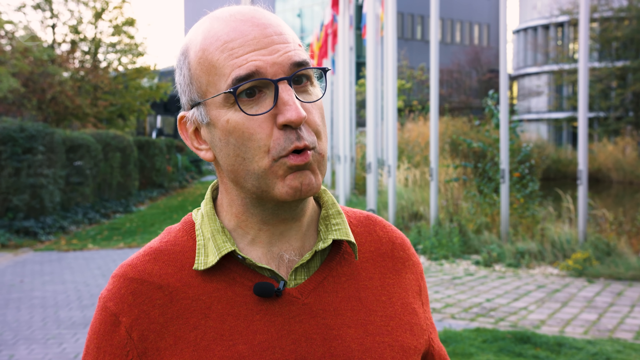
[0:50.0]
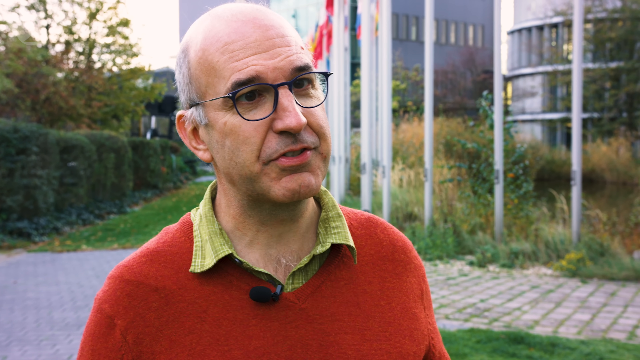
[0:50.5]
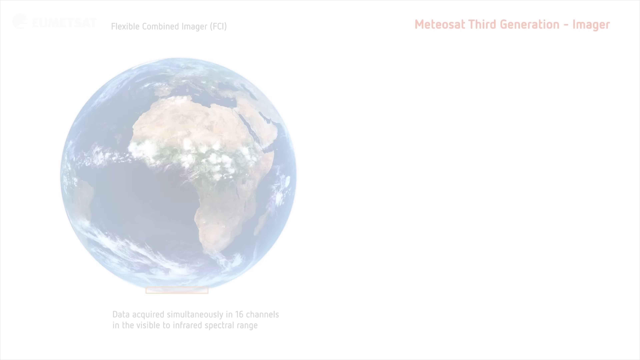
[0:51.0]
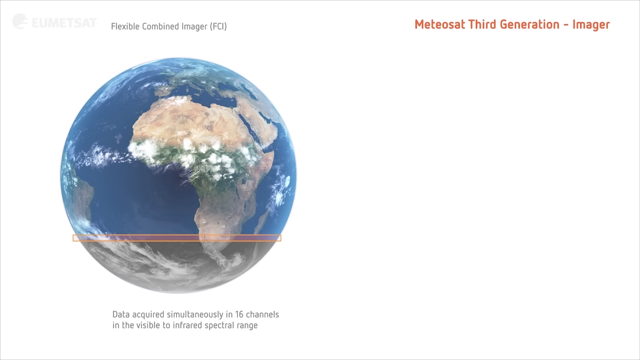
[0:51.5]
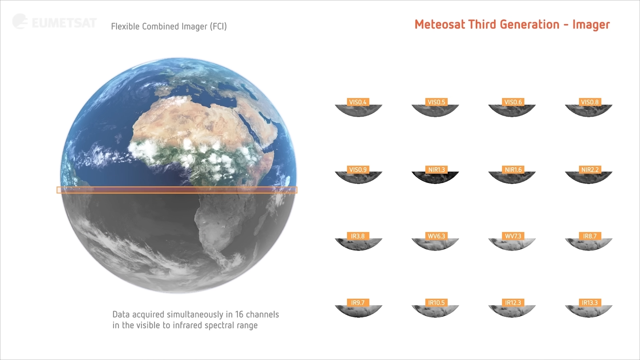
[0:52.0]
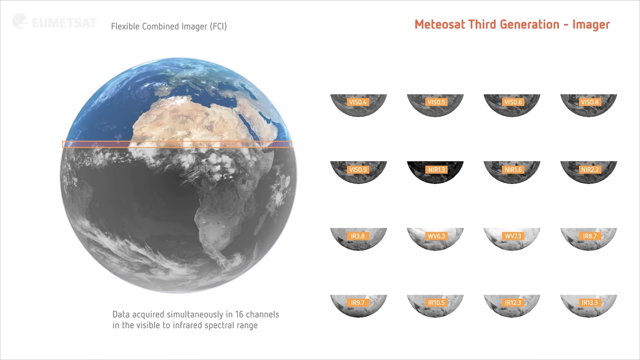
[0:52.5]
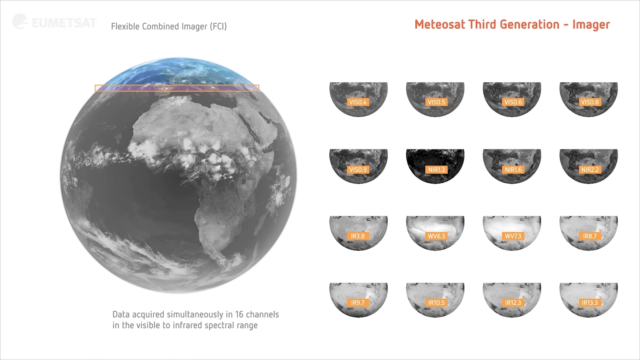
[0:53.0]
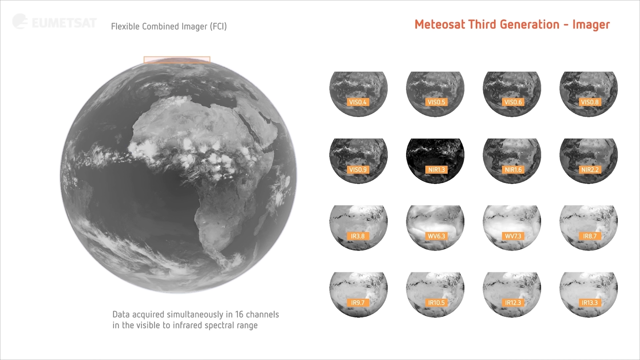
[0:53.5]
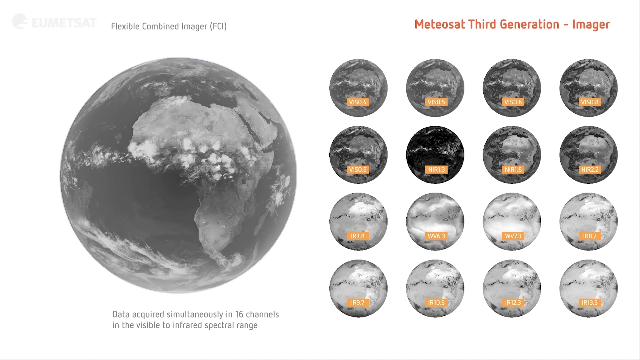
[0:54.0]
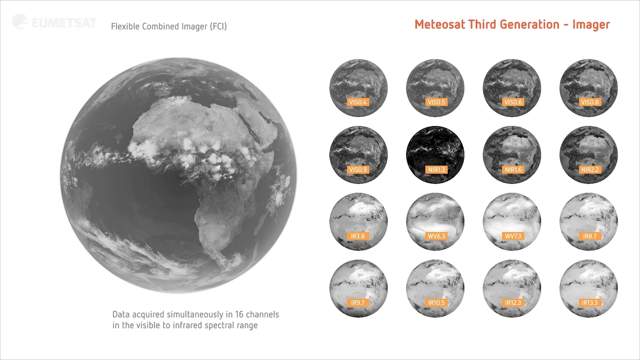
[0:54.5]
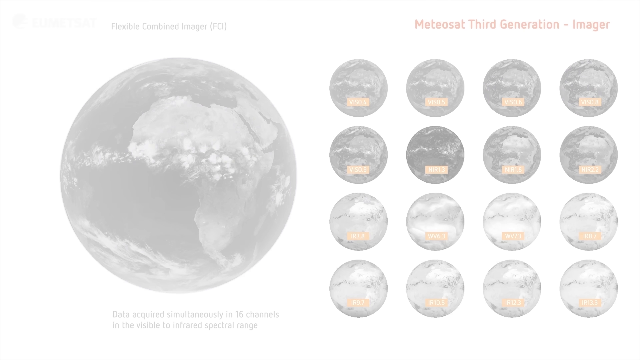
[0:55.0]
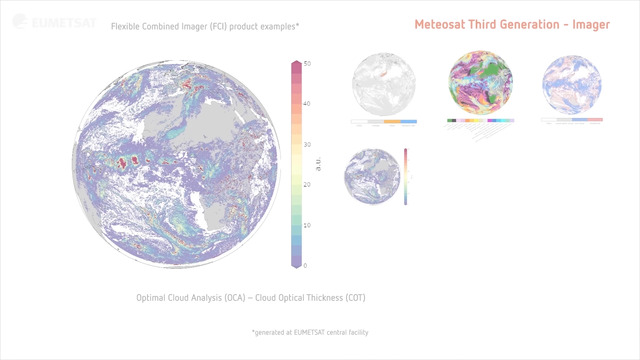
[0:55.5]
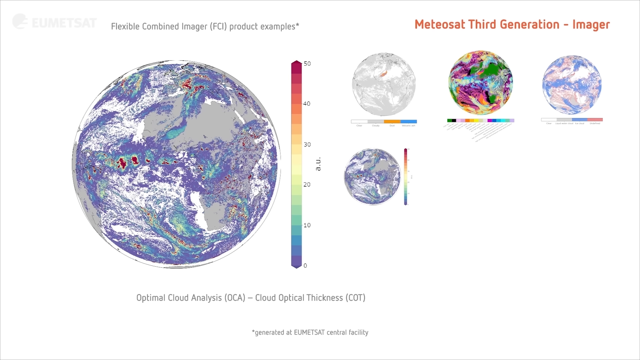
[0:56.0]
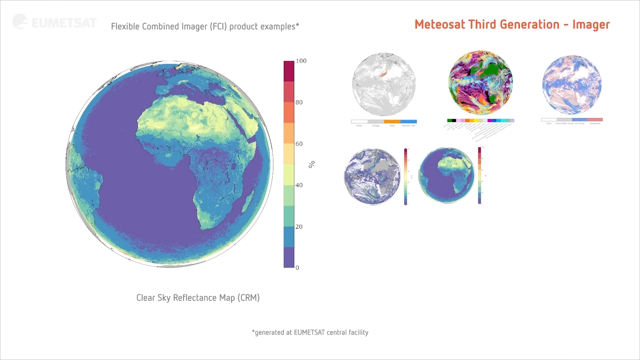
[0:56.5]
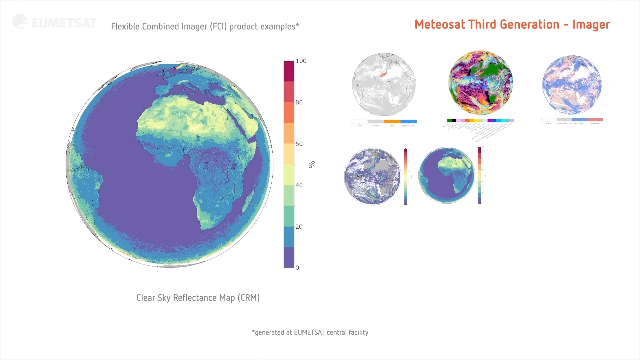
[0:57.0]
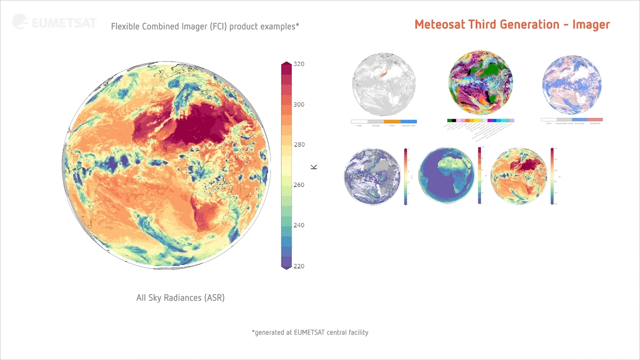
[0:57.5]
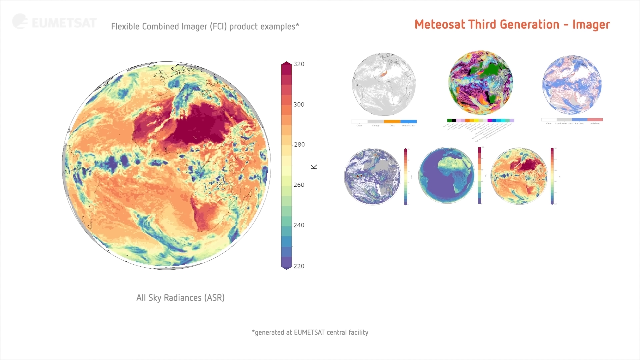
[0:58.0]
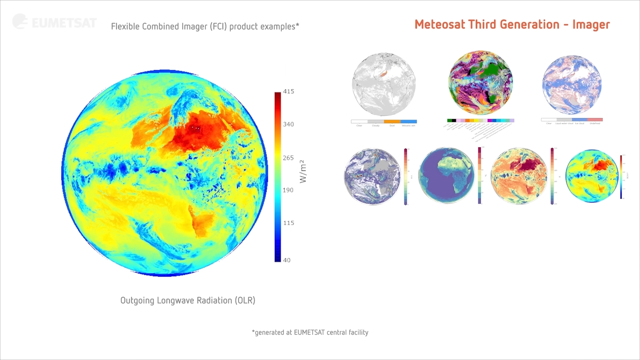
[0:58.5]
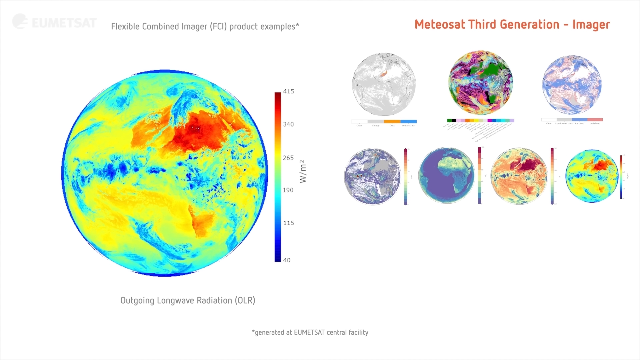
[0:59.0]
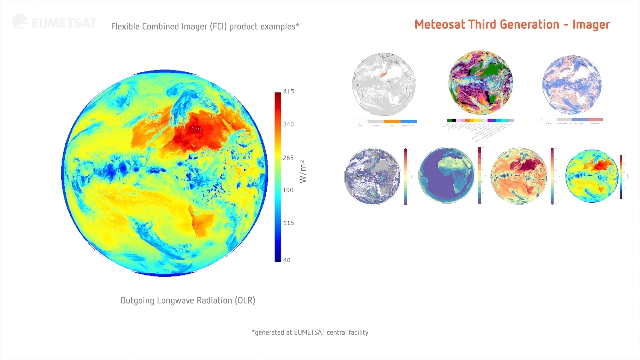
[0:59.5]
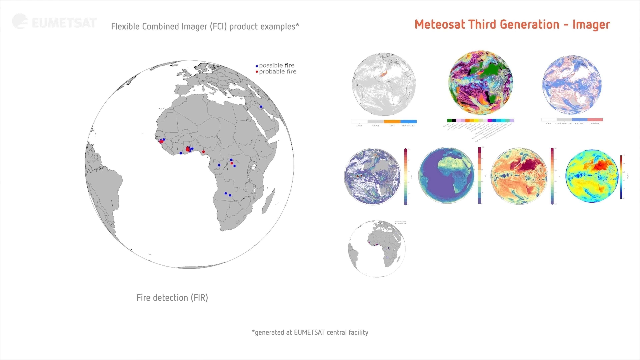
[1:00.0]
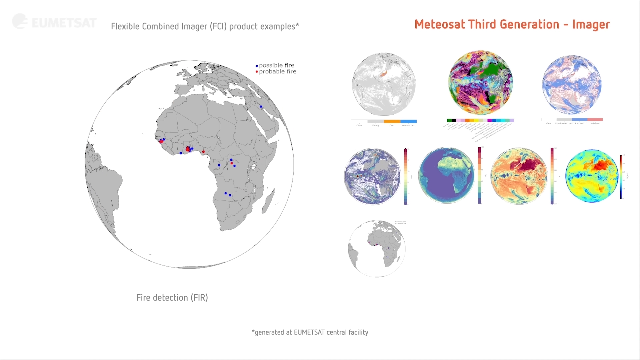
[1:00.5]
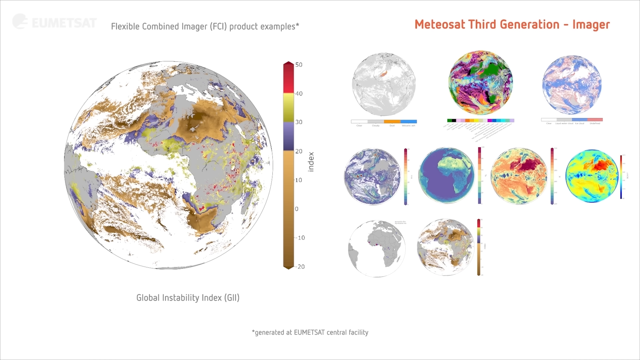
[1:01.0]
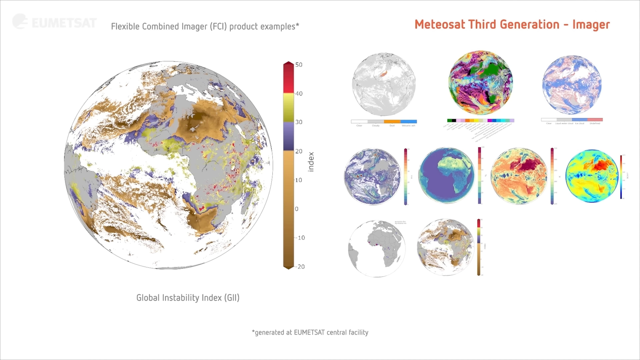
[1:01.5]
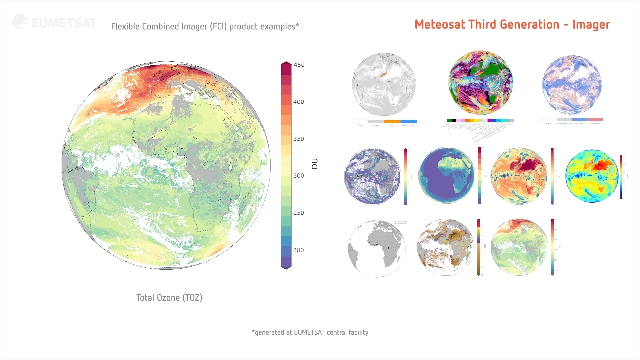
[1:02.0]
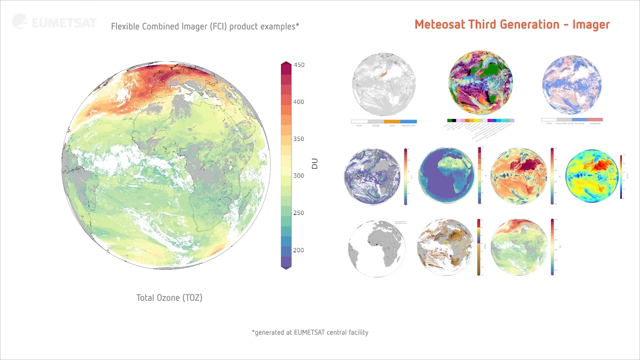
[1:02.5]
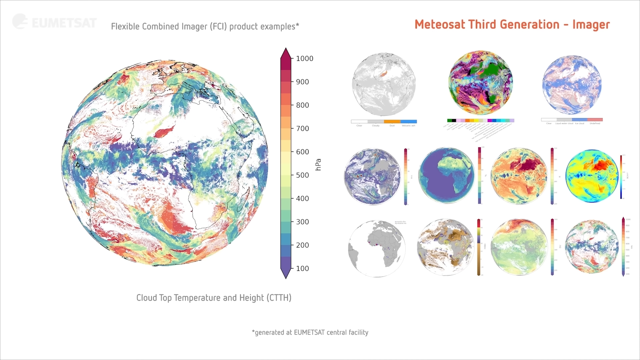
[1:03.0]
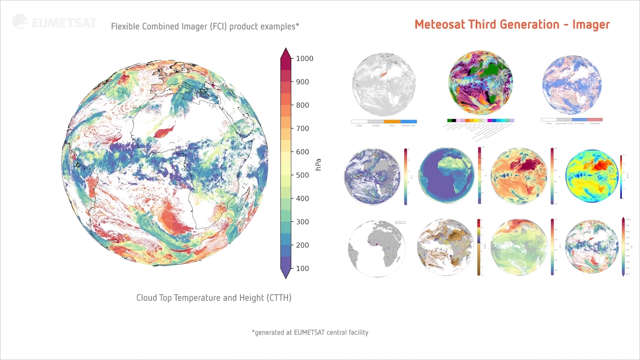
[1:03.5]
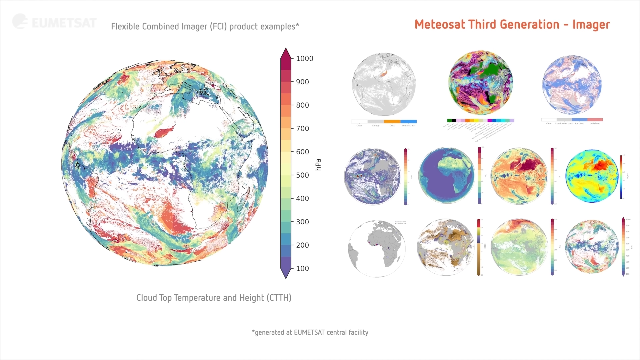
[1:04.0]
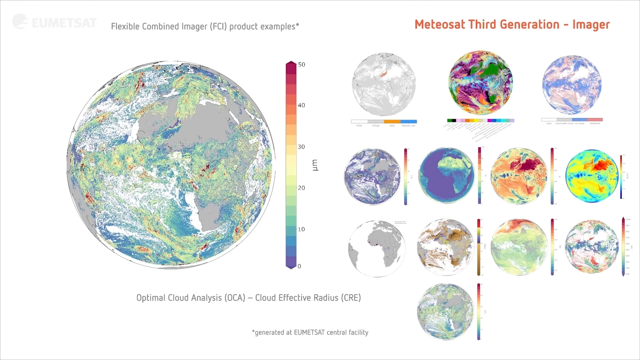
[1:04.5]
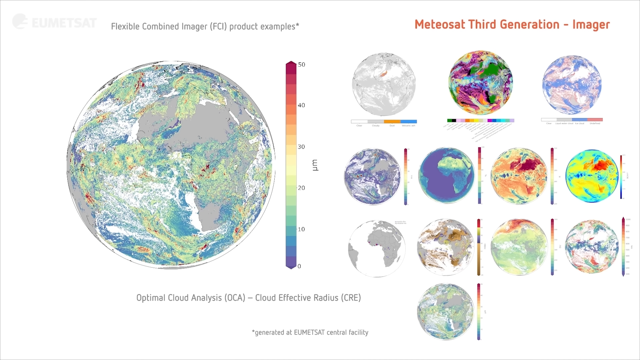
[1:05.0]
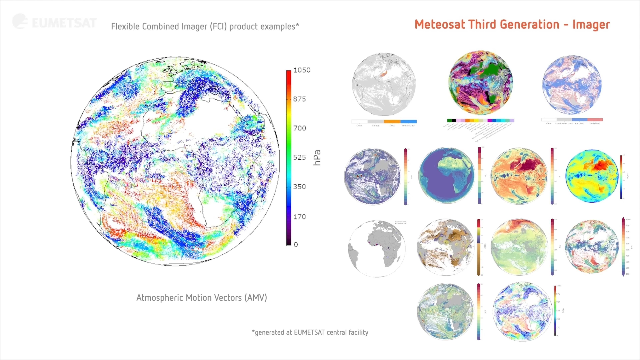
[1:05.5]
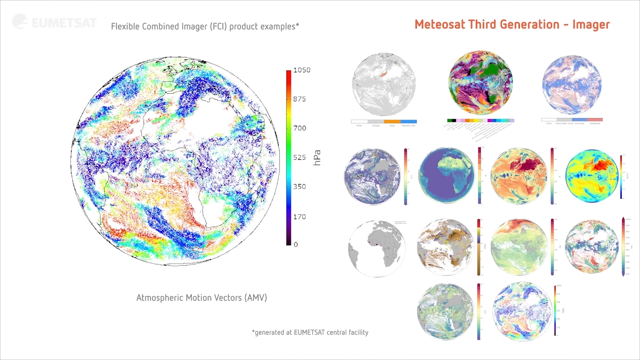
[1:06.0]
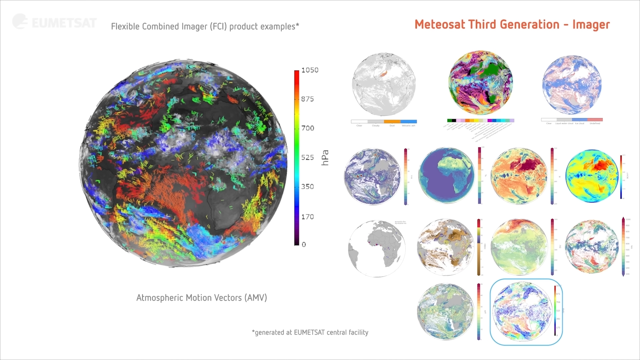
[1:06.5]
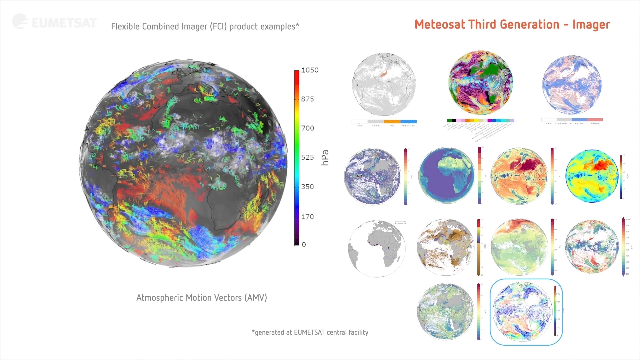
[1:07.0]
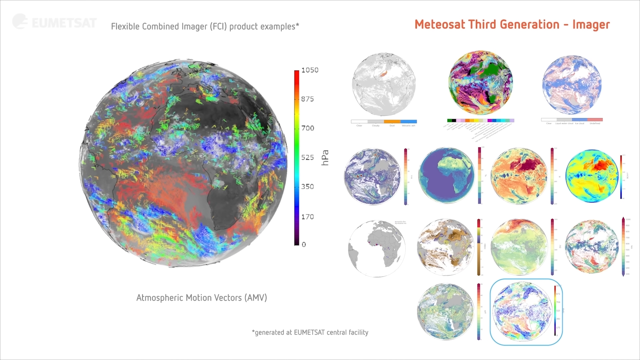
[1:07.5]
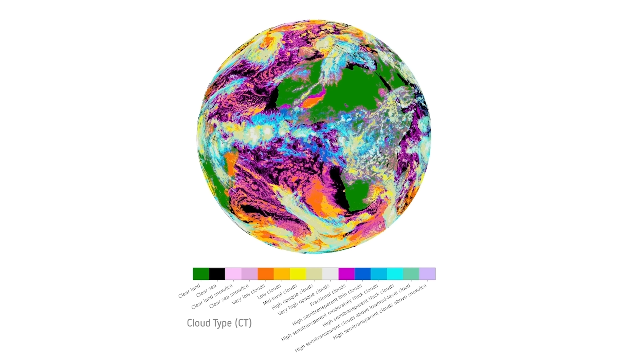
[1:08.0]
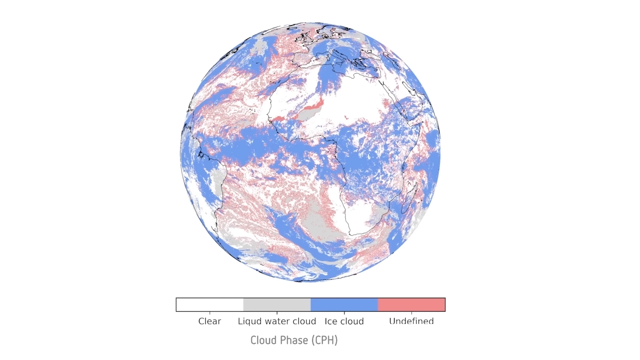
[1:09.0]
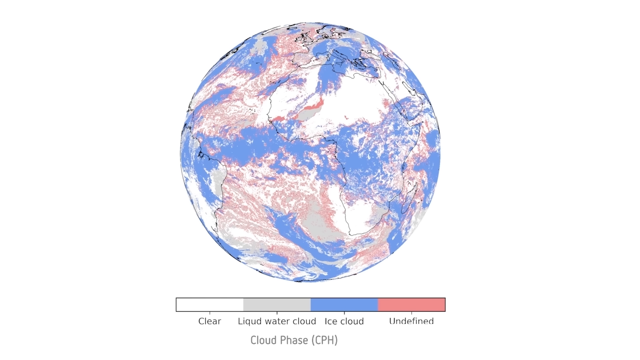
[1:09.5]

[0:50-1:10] An image of the Earth starts out in color; the bottom changes to black and white, and this moves up the globe until everything is black and white. To the right are images in four rows of four, 16 in total, which generate from the bottom to the top as the color change happens, which seems to show the Earth being scanned. The view changes to a sort of temperature view of the planet in blue and green colors, with a scale from zero in purple to a hundred in red, and text reading "Mediostat third generation imager". The planet then turns orange and red, with a different scale from 220 to 320 and text above it reading "flexible combined imager product examples", apparently showing types of data the satellite would collect. A series of other images in many different colors, with different scales, is quickly scanned through.